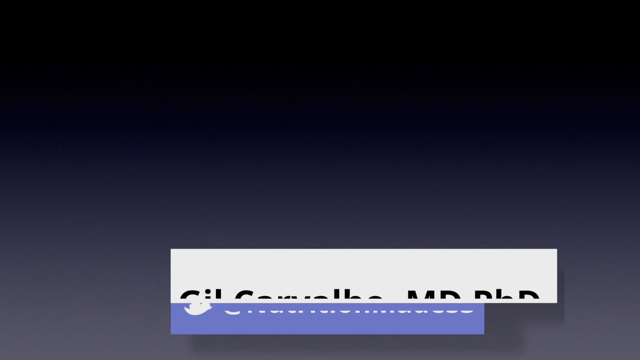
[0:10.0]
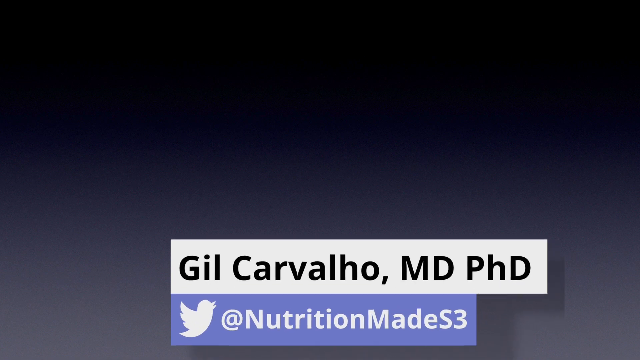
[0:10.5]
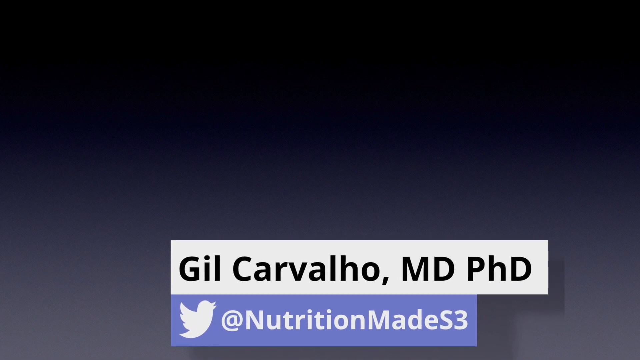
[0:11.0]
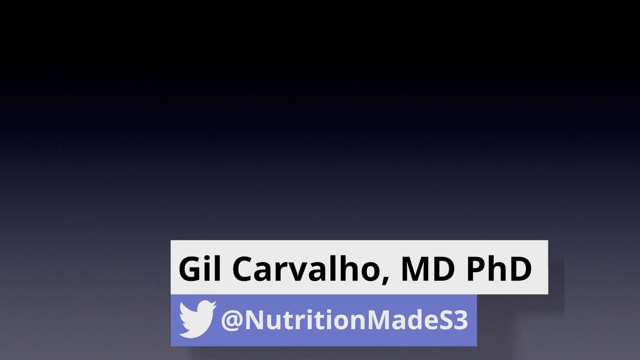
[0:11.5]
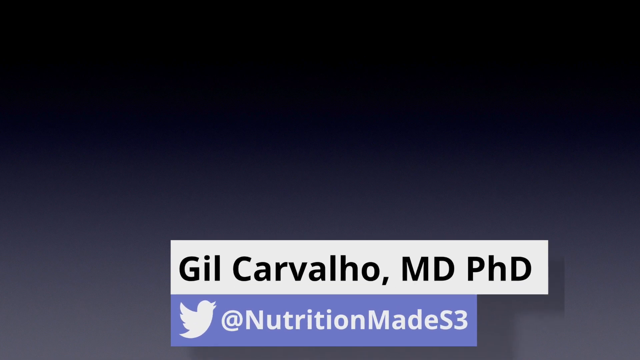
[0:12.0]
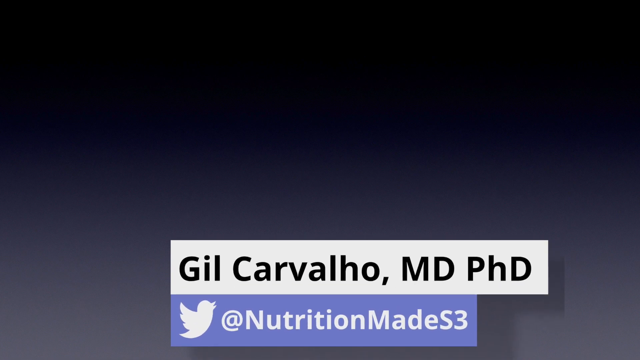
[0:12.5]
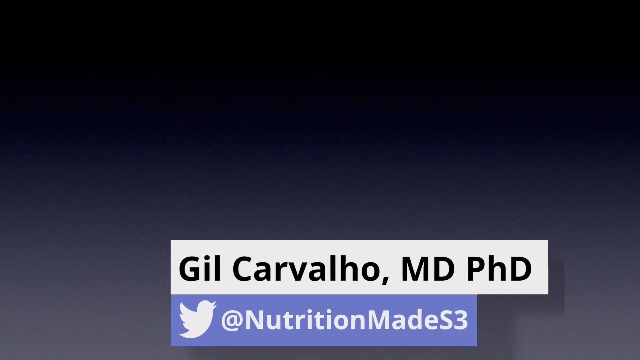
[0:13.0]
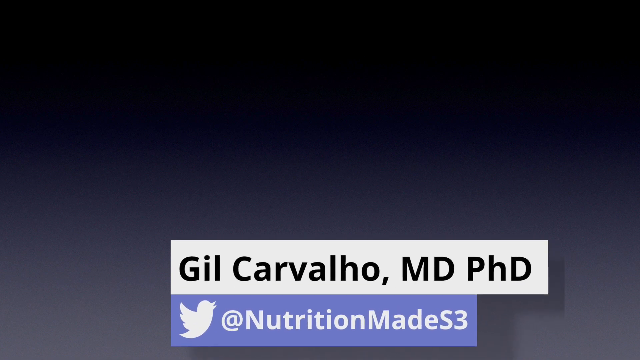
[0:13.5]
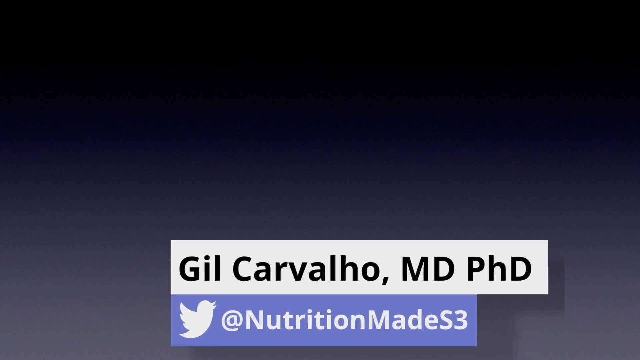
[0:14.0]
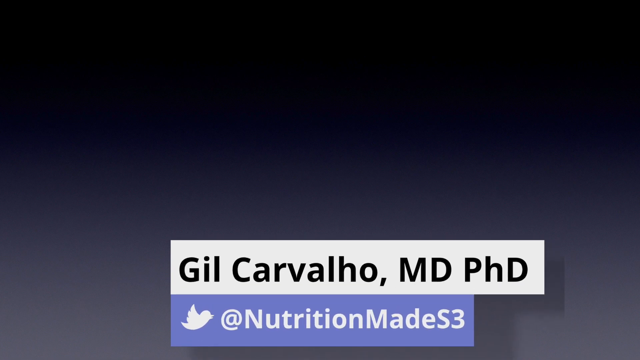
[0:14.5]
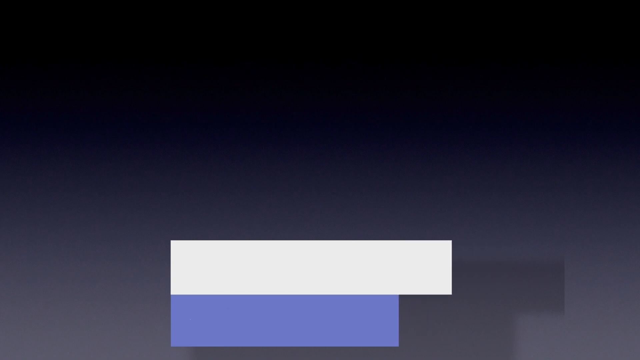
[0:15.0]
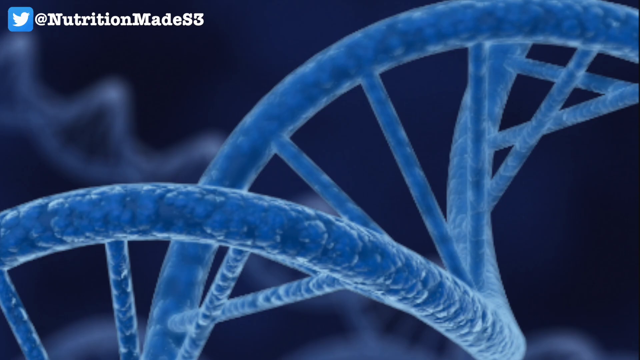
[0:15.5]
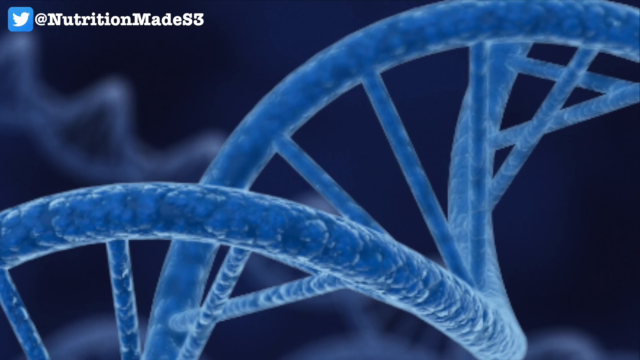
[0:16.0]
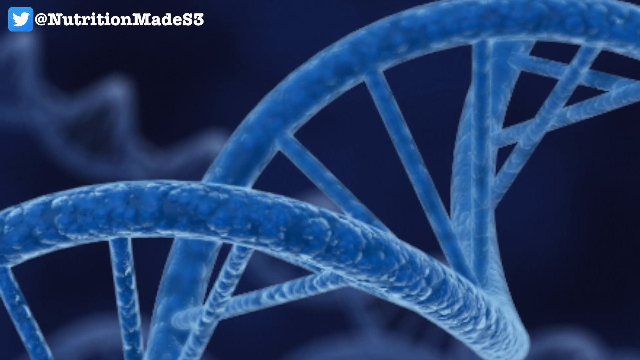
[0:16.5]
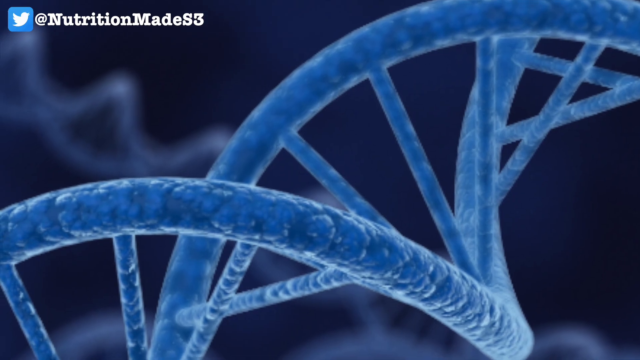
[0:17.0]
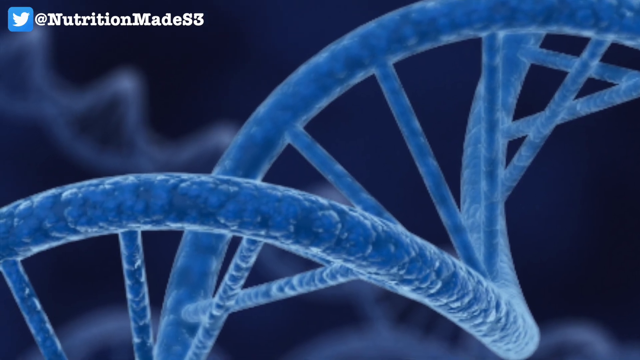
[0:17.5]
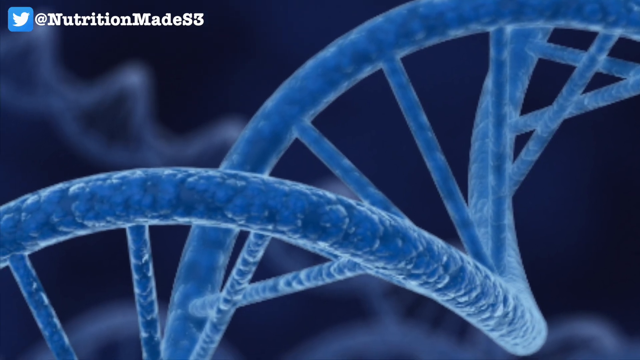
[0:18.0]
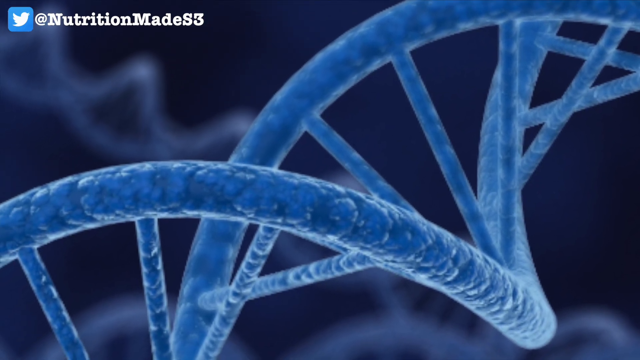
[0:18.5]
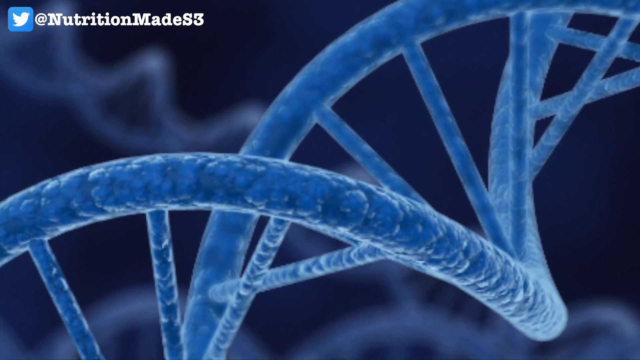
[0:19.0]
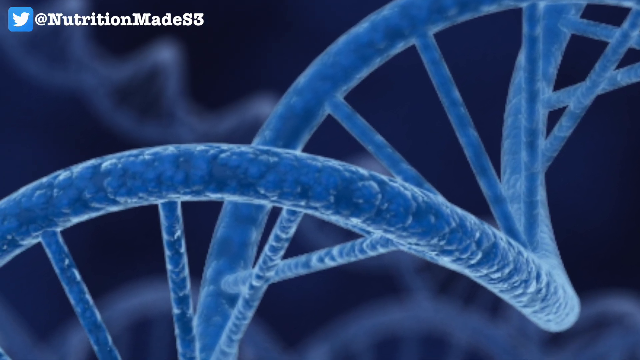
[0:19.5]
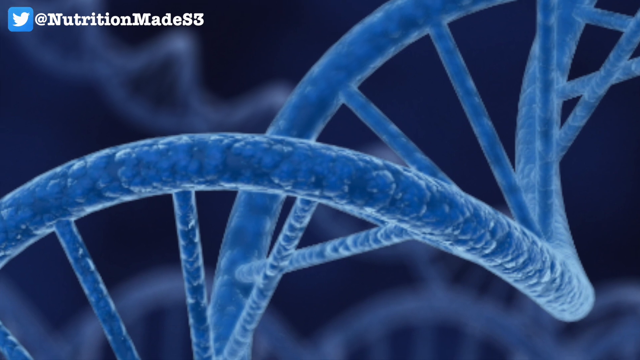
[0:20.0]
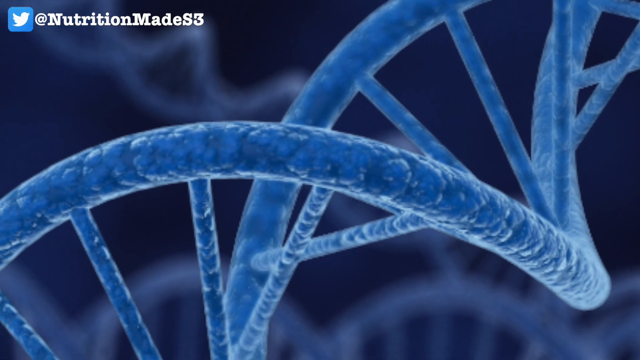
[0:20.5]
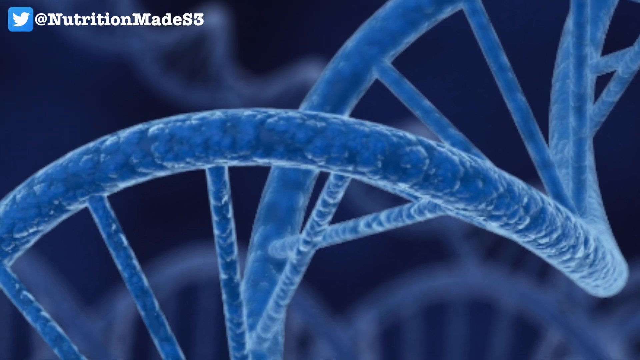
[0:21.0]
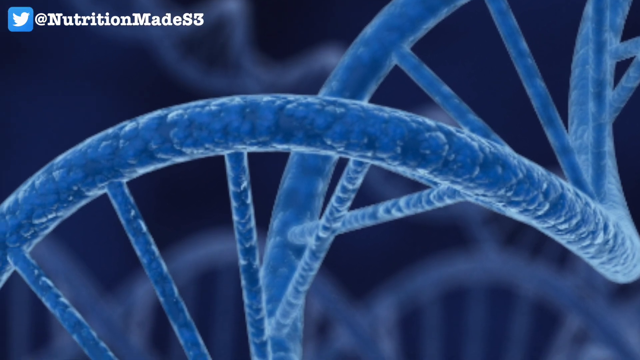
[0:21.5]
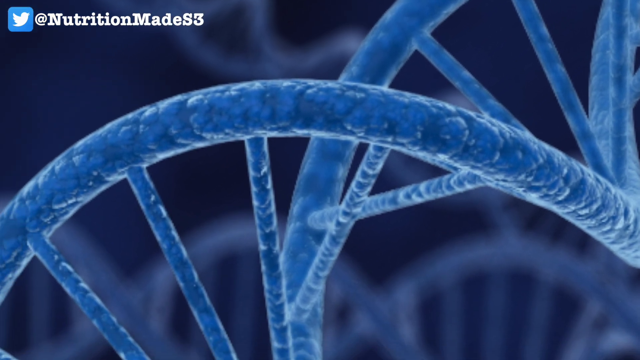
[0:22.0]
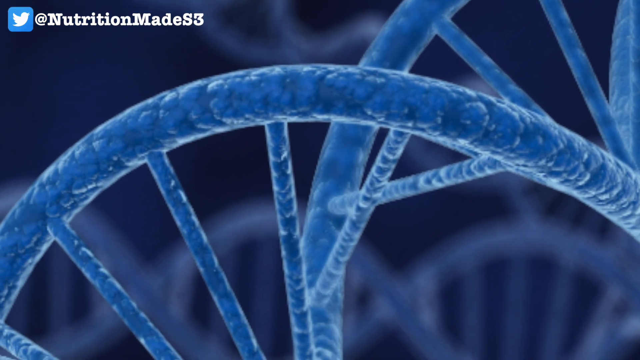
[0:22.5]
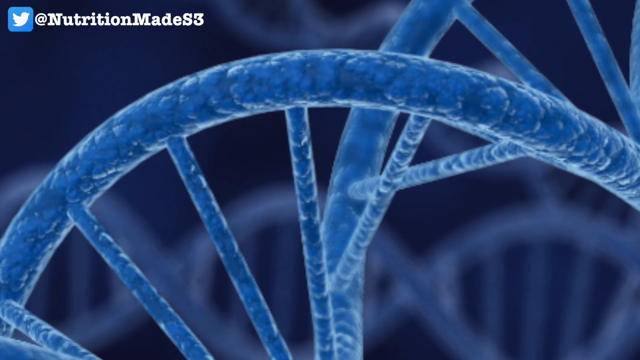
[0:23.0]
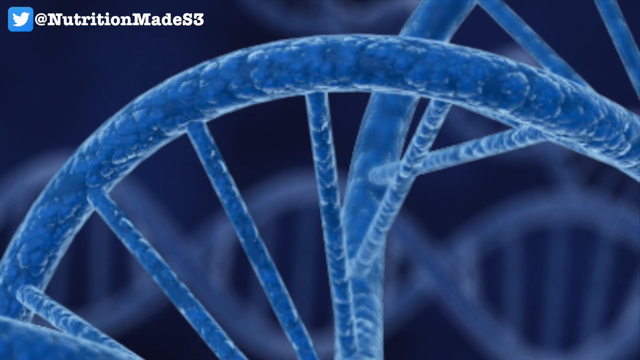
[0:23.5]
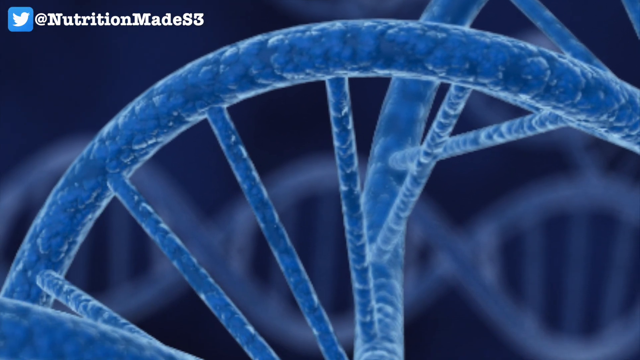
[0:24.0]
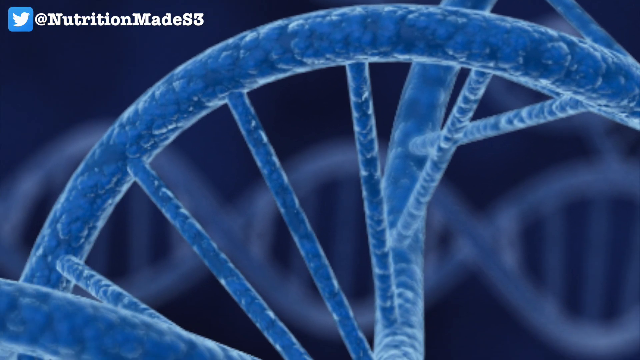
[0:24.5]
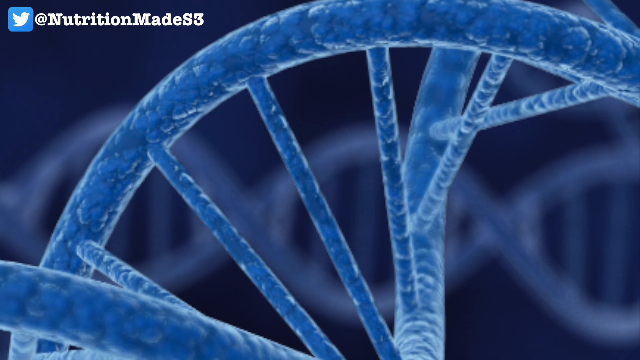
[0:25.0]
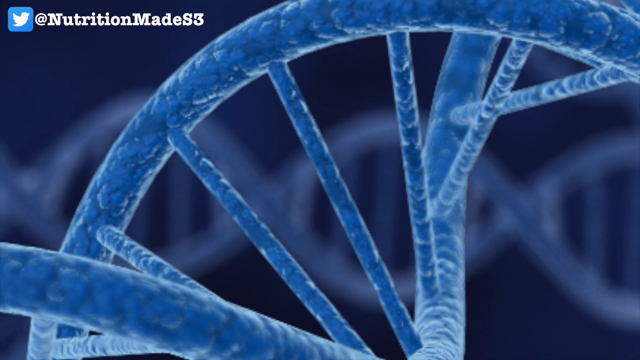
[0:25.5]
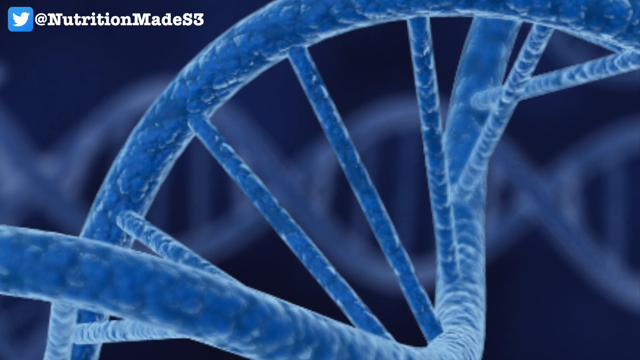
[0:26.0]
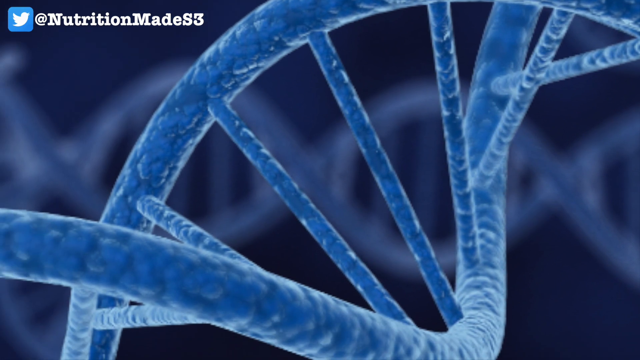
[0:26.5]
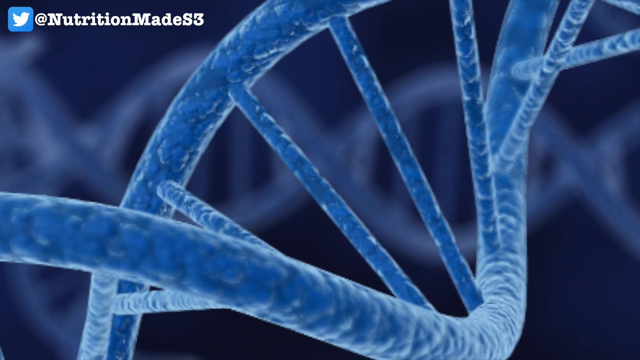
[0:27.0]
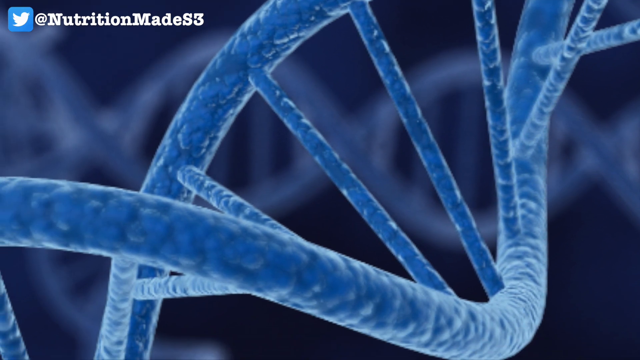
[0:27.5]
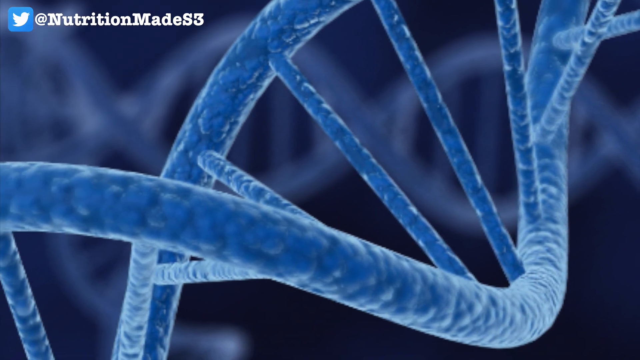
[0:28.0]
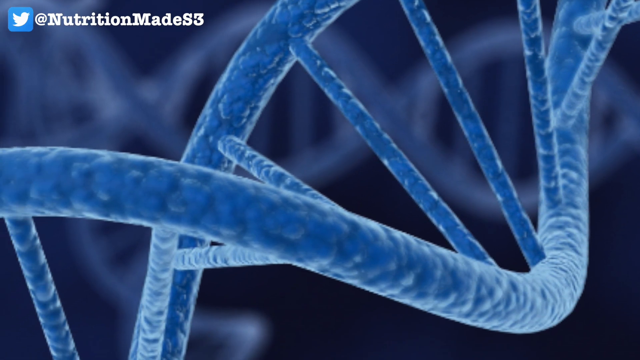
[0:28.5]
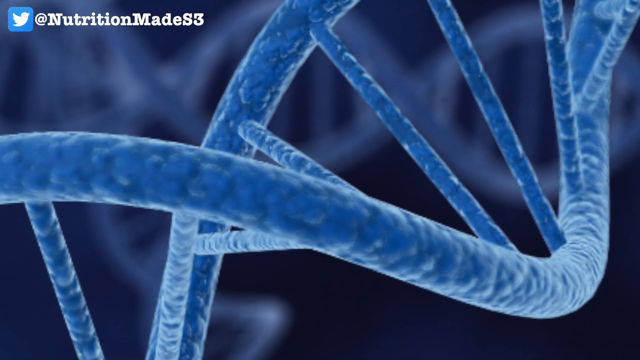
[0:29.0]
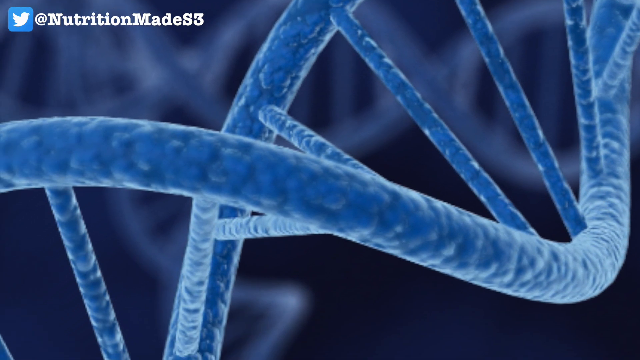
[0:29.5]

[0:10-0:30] On a black screen, a pop-up comes up from the bottom: a white banner reads "Gil Carvalho, MD, PhD," and below it, on a blue banner, is the Twitter bird on the left with the text "At Nutrition." The screen then changes to what might be a cell close-up, like something seen through a magnifying glass; it is unclear what it depicts, but it is blue and spiny against a black background. In the upper left corner is a Twitter bird with the text "At Nutrition, Made S3." The camera scrolls to the lower left, showing other views of the microscopic blue item, which is somewhat spiny looking, much like a rope.